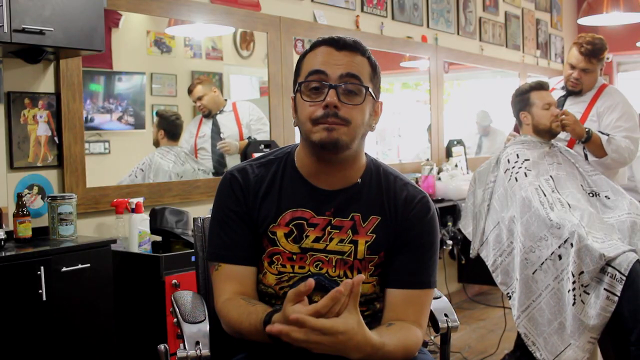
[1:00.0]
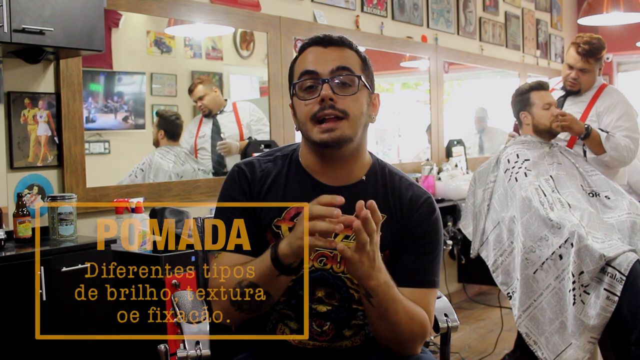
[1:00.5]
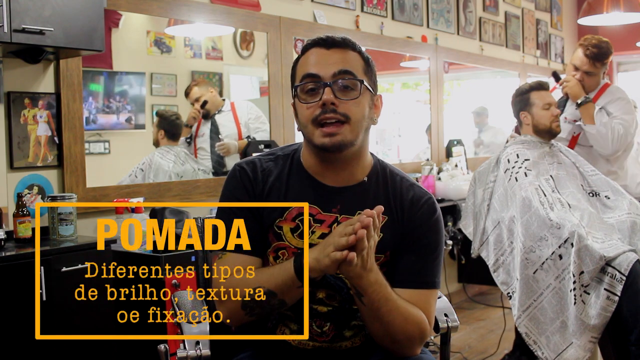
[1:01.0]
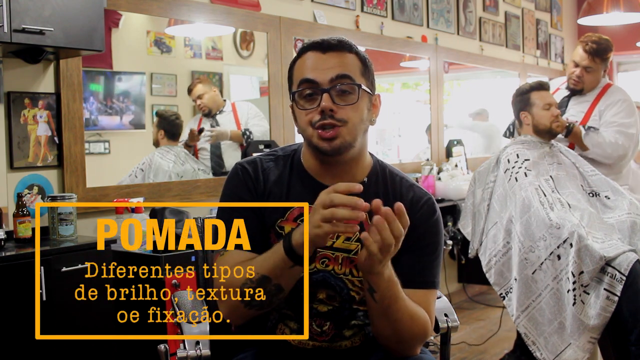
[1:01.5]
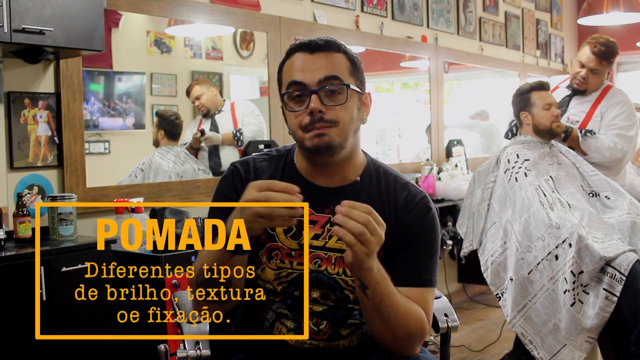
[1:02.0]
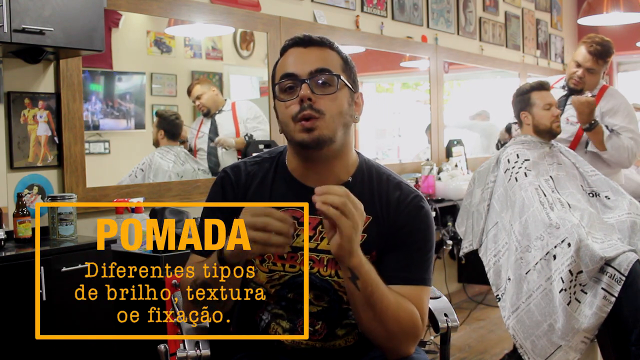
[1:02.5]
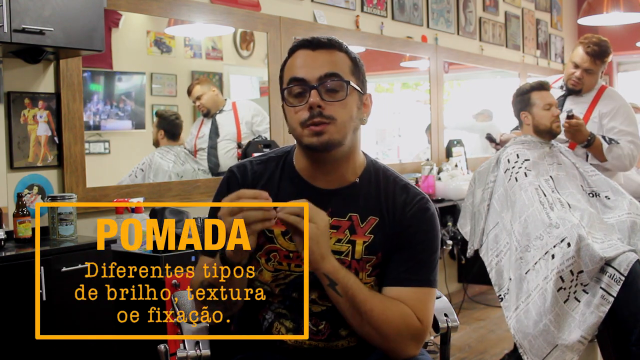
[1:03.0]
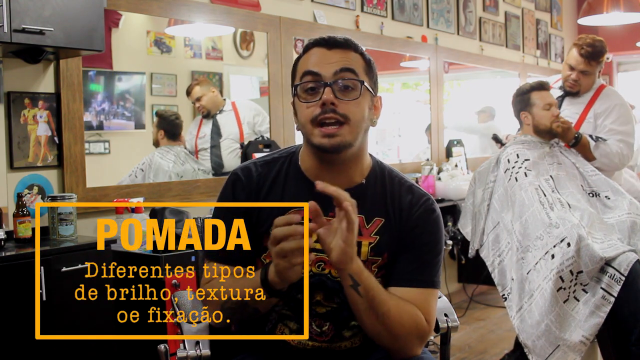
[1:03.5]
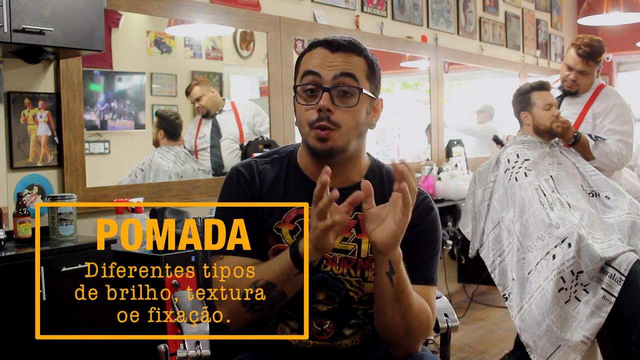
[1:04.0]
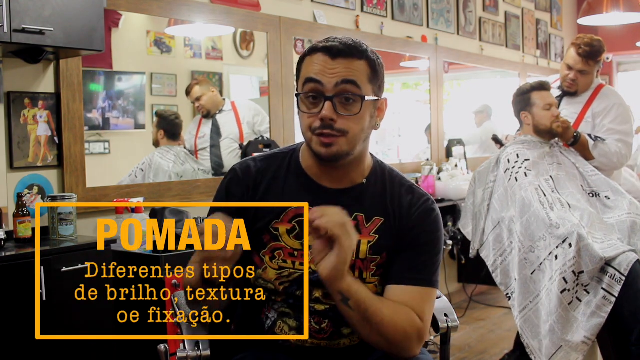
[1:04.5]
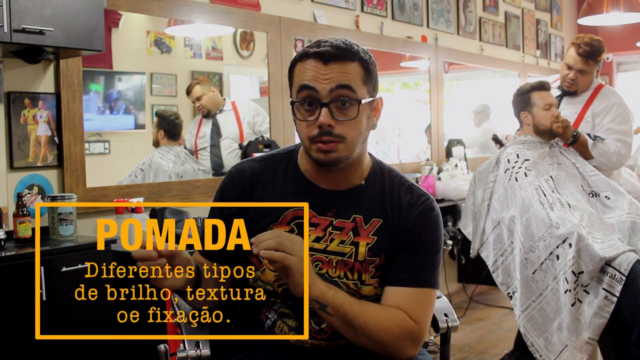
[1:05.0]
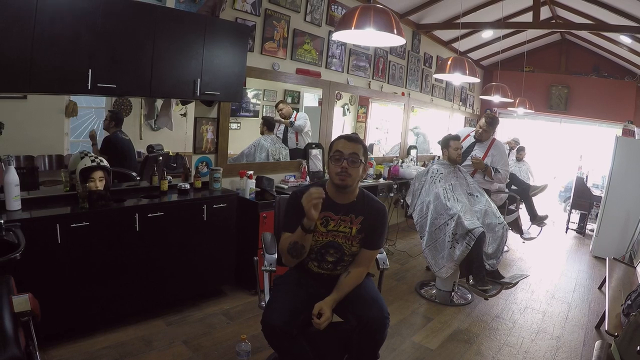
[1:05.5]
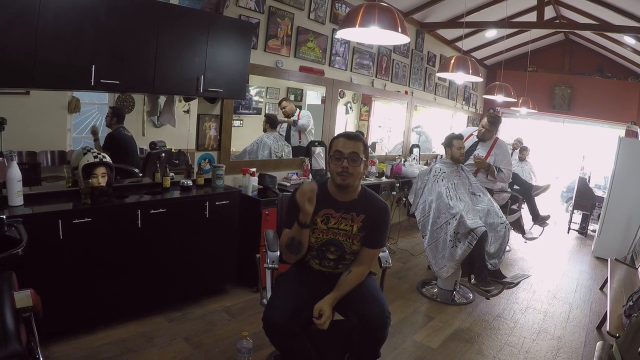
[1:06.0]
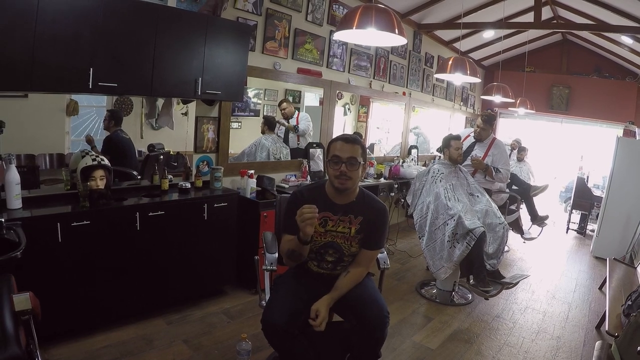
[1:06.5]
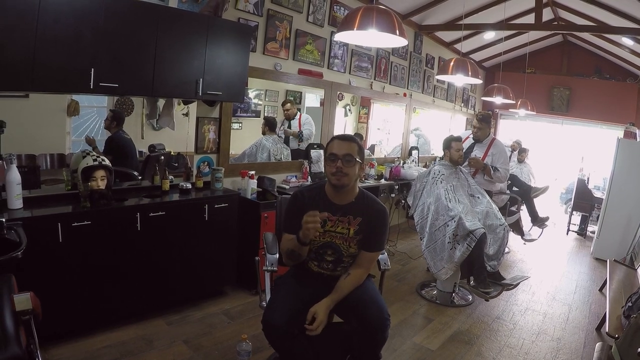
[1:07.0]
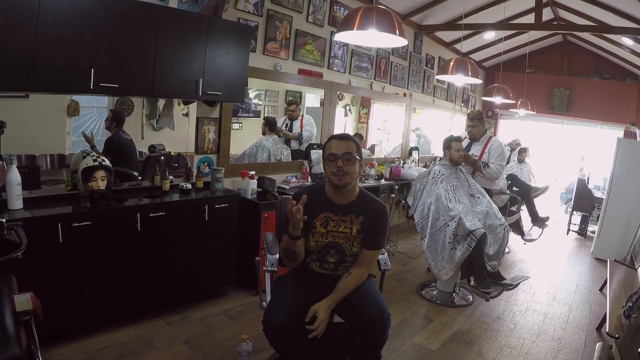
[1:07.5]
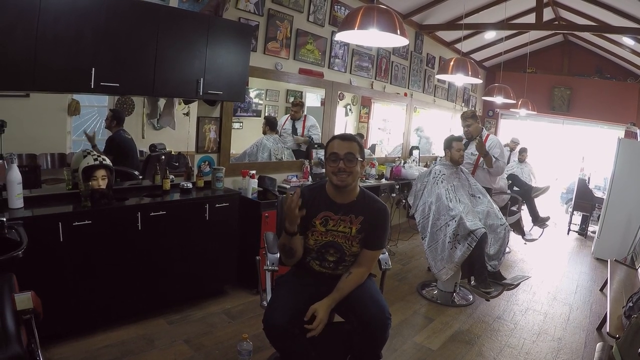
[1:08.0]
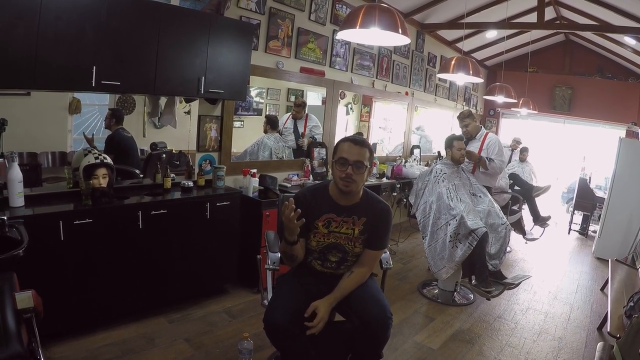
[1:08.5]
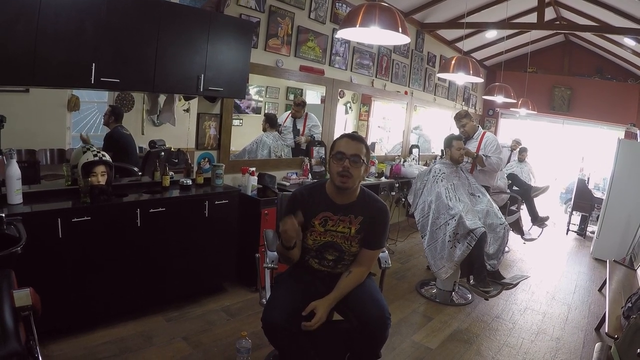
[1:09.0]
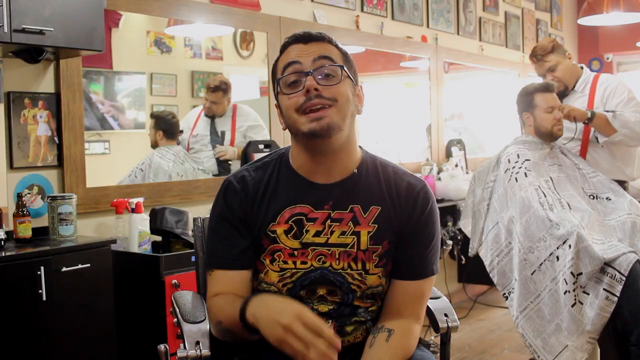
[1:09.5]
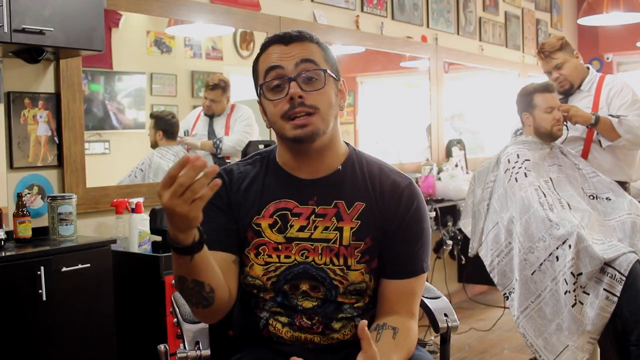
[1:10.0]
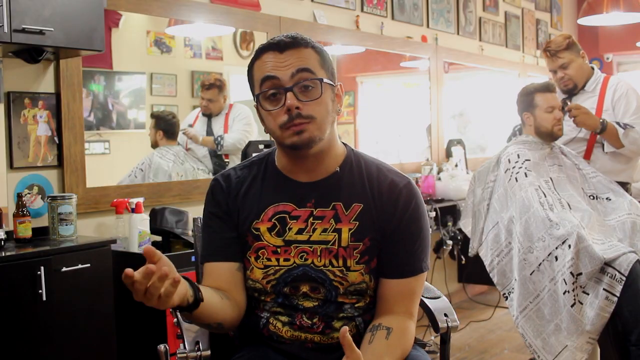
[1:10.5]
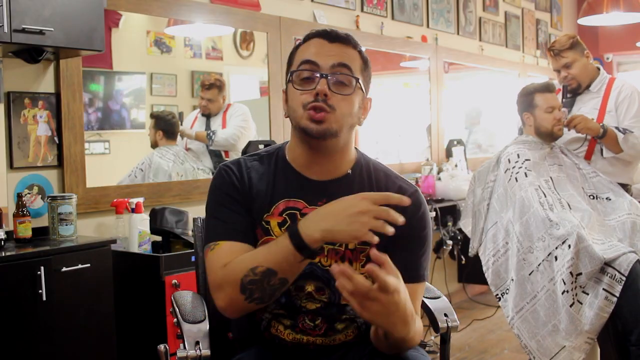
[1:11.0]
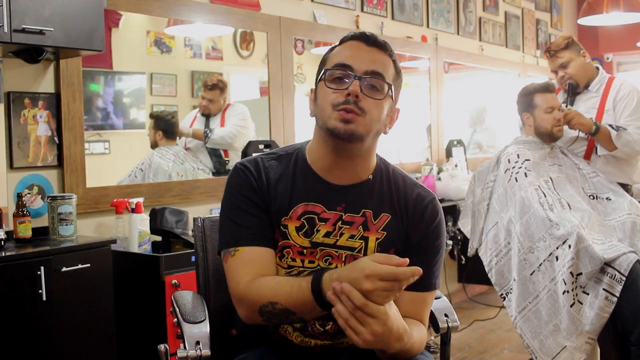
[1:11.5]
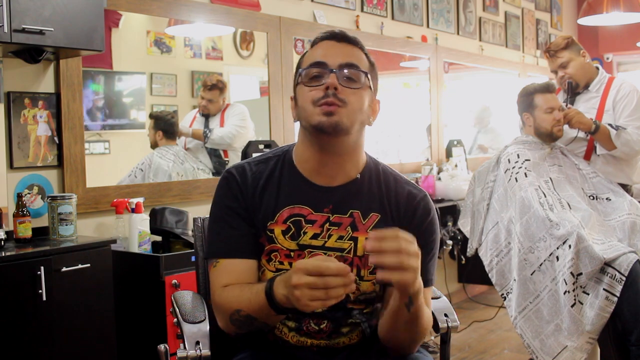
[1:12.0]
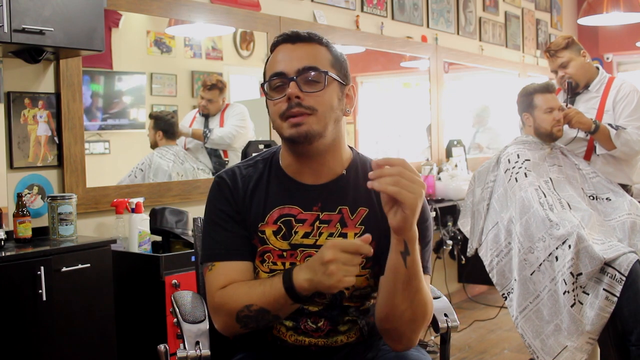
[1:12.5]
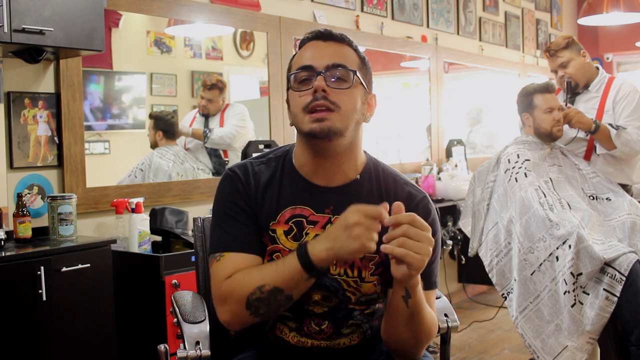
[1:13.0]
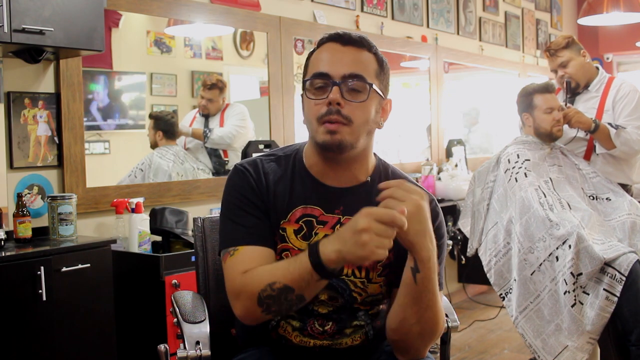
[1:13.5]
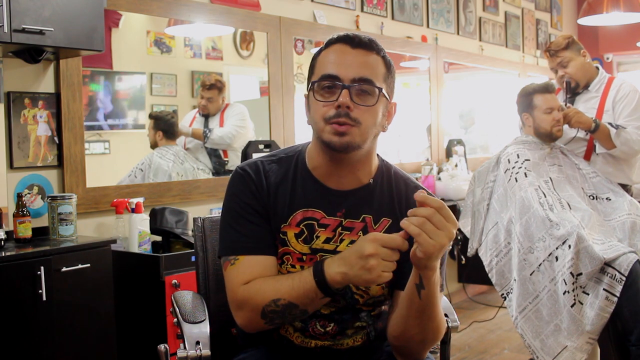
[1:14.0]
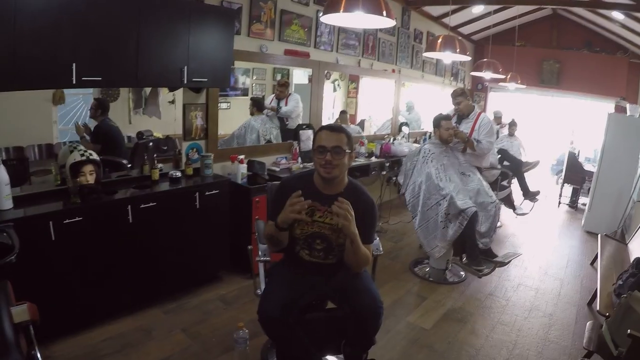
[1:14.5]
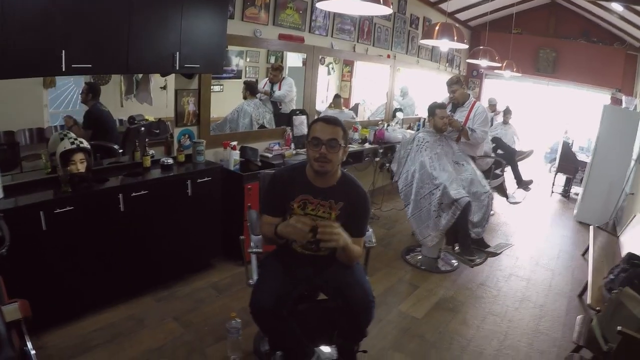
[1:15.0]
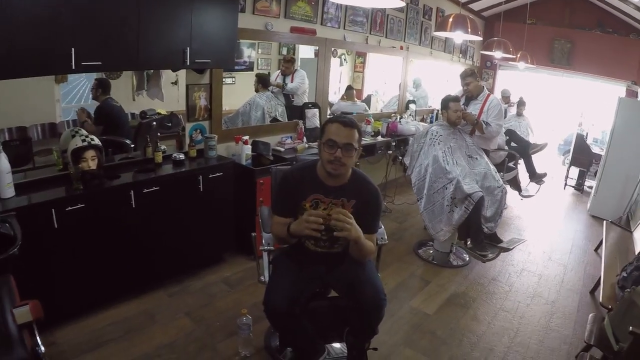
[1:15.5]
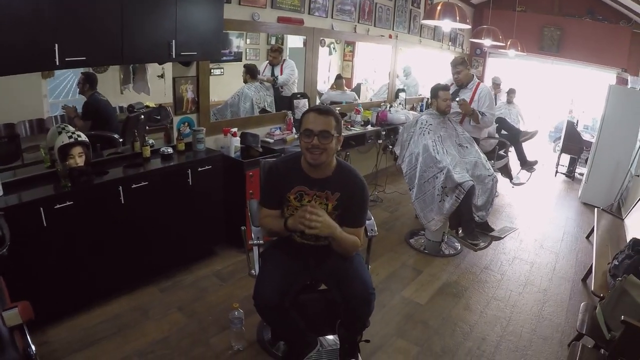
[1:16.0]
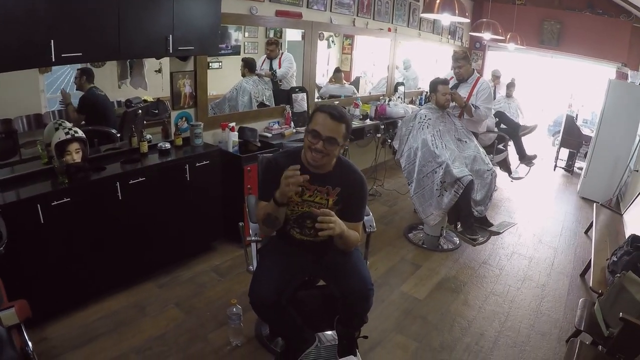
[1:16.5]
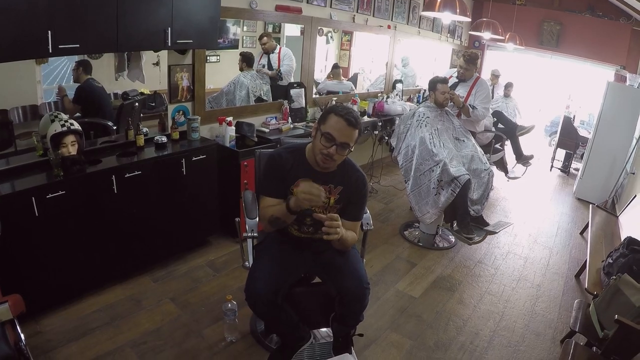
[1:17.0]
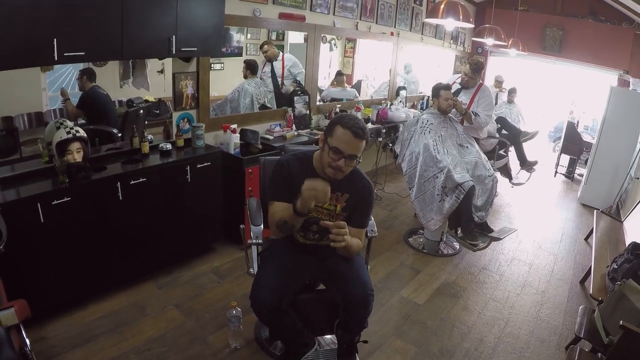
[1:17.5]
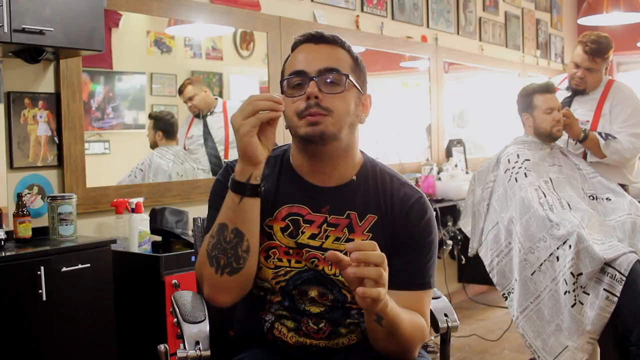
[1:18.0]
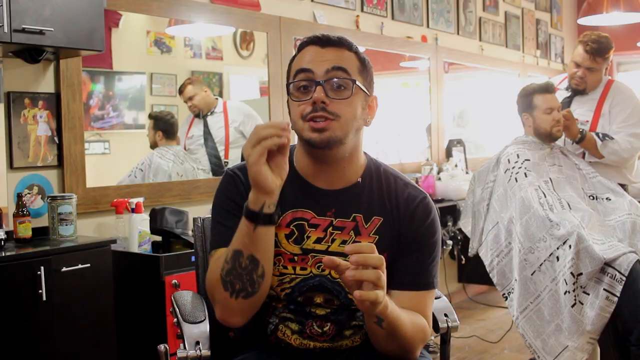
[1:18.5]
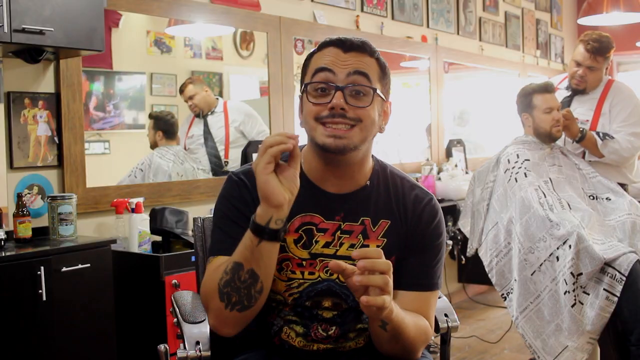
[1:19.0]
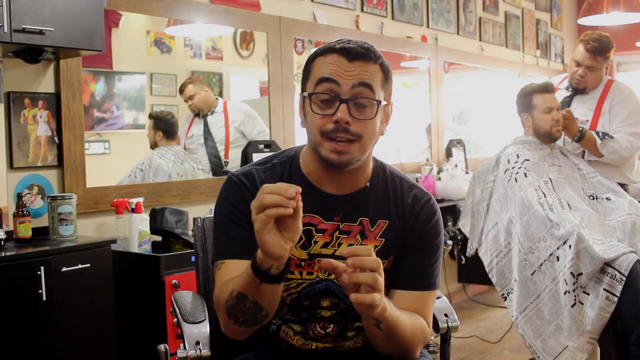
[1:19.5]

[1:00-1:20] A man is doing an interview or recording a video. He wears a black t-shirt with something written on the front that is hard to read, black trousers and glasses, has a watch, and has a tattoo on his hand. Around him, people wear white shirts and black ties, apparently their uniform. A lady in an orange top and black trousers goes to open the fridge, and another man wears a white shirt and black trousers. The room has many picture frames on the wall and a big mirror in which a man can be seen cutting another man's beard. There are brown cardboards and a brown door with glass. The camera angle appears to change.